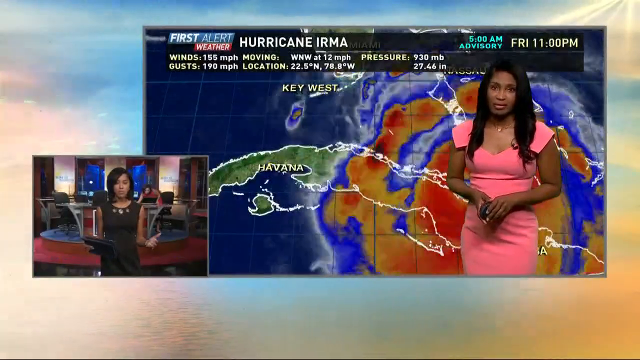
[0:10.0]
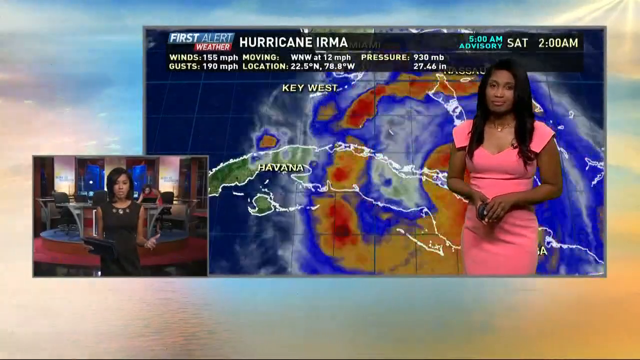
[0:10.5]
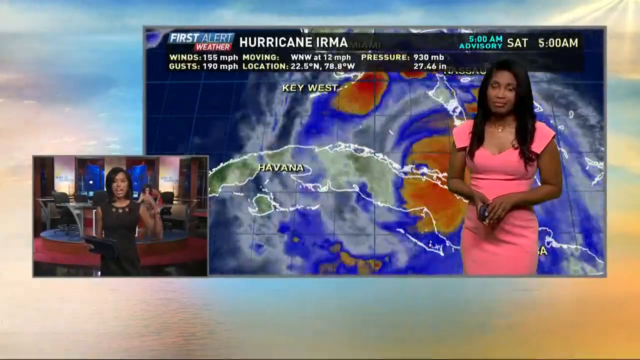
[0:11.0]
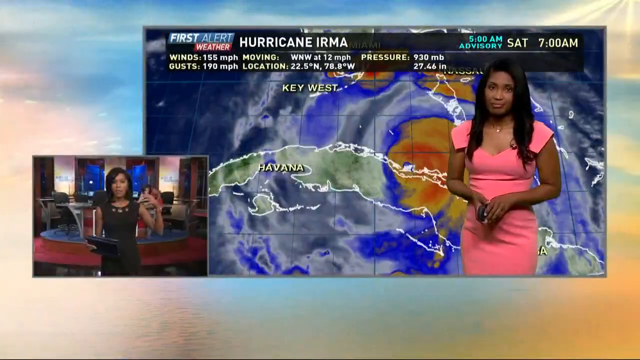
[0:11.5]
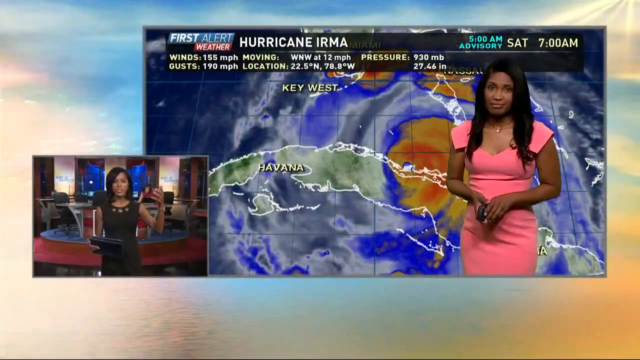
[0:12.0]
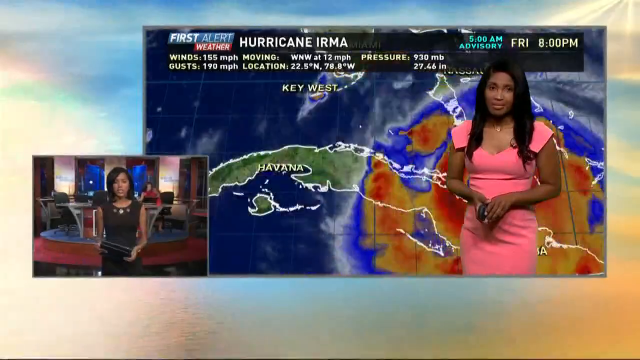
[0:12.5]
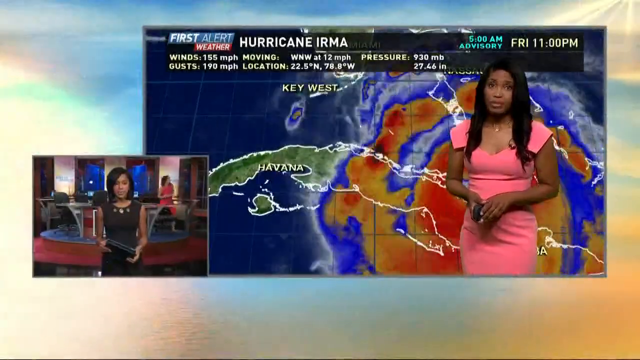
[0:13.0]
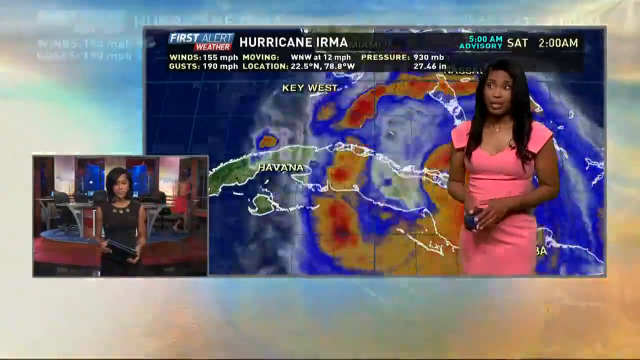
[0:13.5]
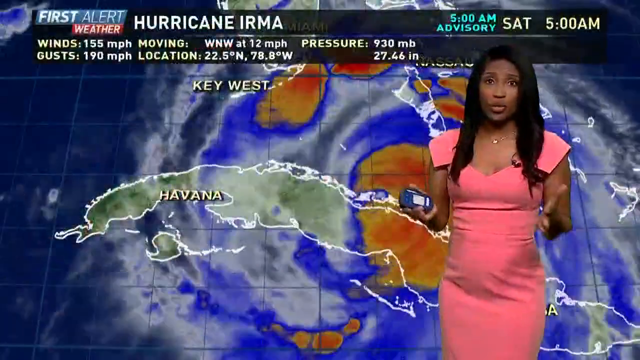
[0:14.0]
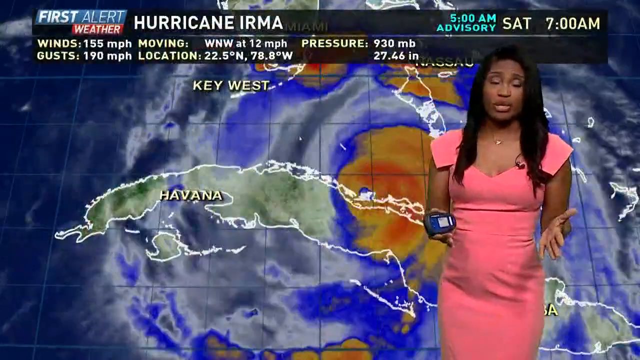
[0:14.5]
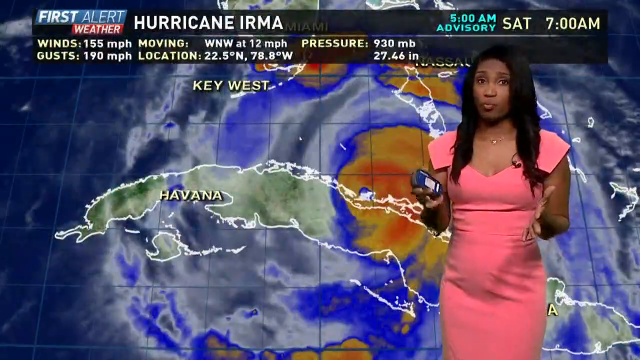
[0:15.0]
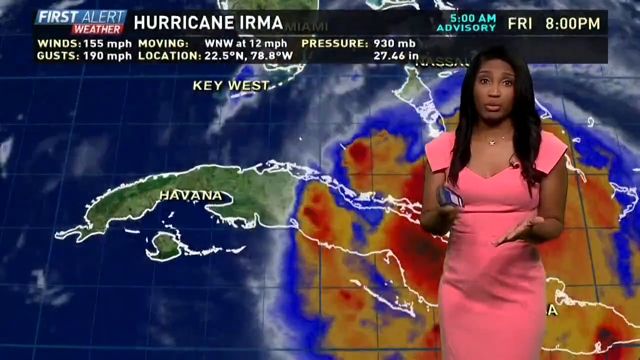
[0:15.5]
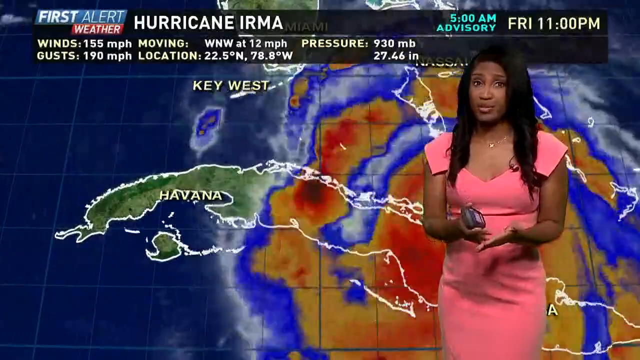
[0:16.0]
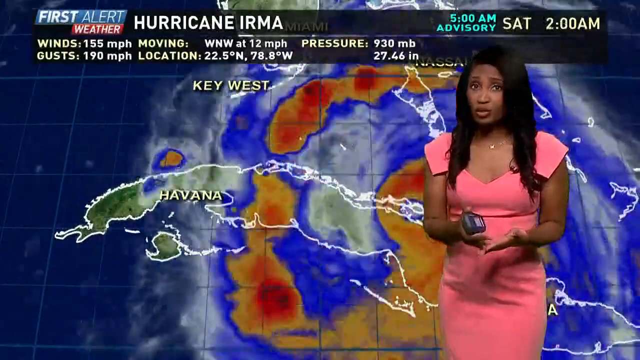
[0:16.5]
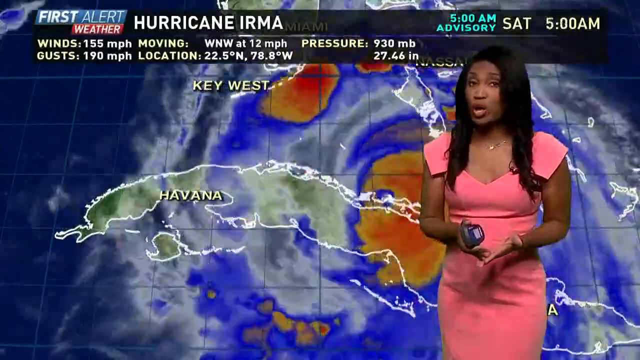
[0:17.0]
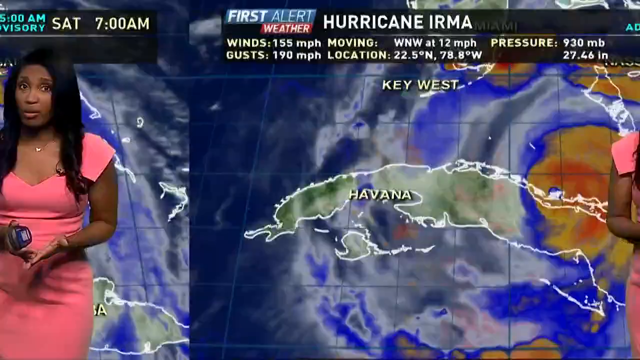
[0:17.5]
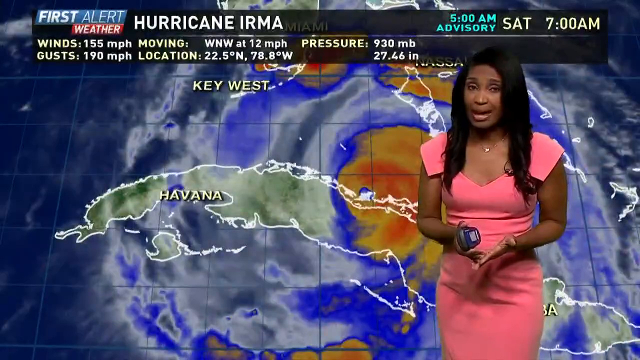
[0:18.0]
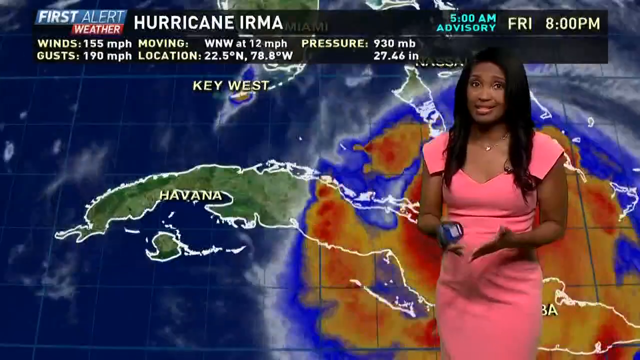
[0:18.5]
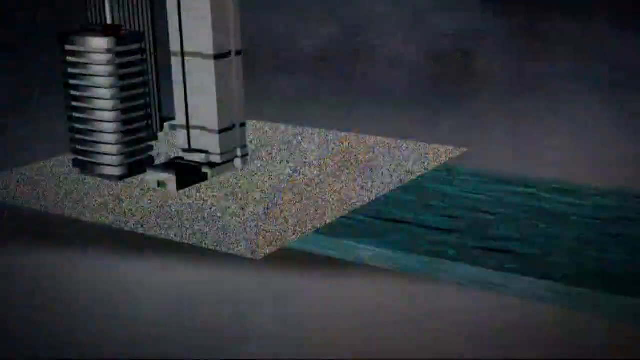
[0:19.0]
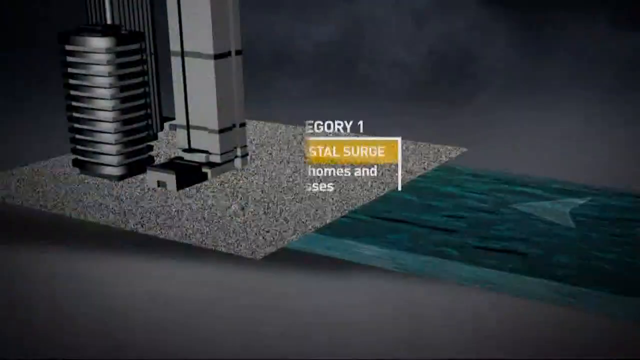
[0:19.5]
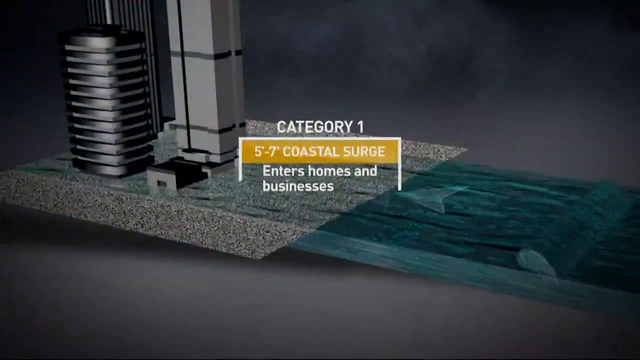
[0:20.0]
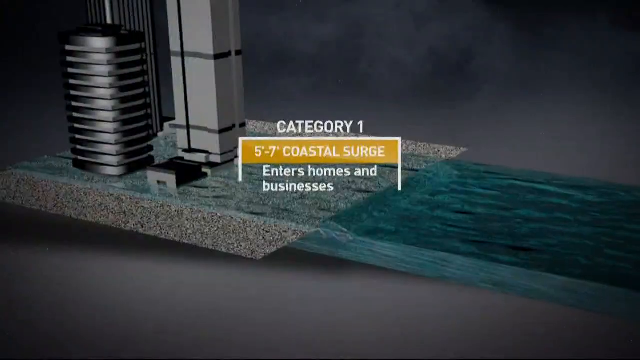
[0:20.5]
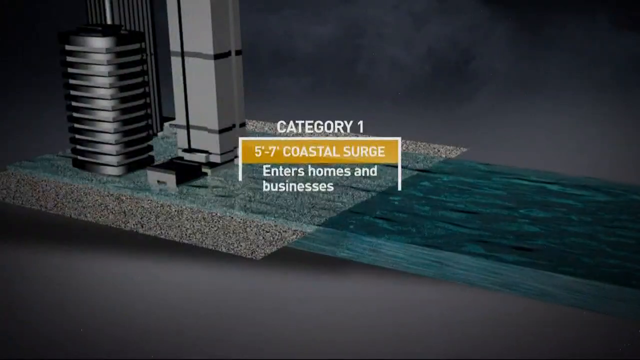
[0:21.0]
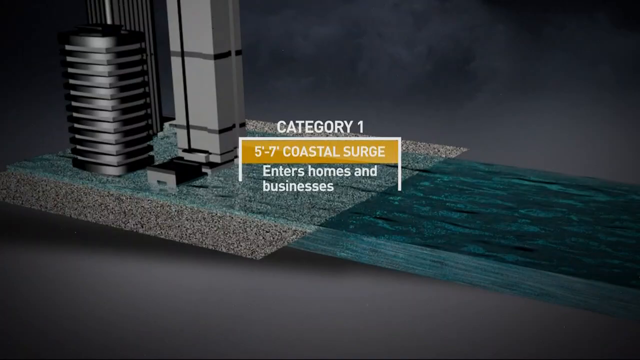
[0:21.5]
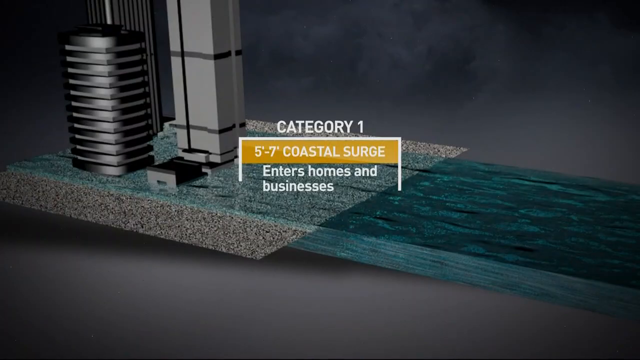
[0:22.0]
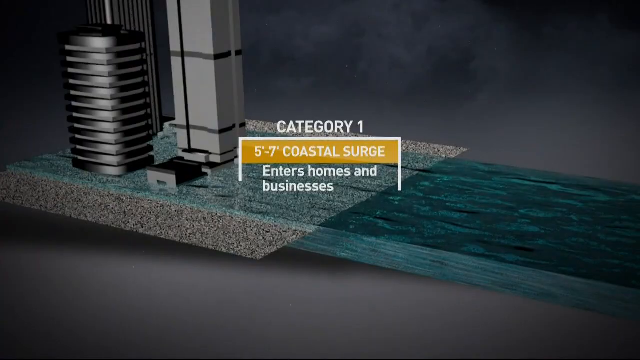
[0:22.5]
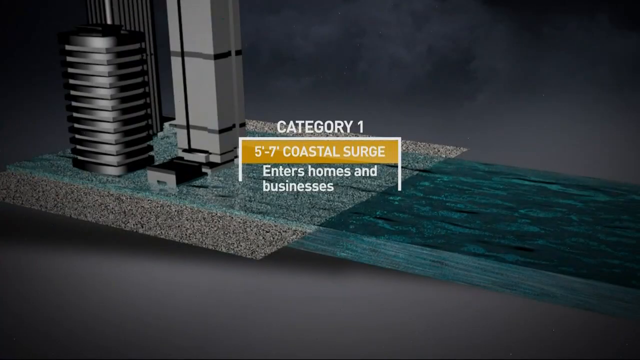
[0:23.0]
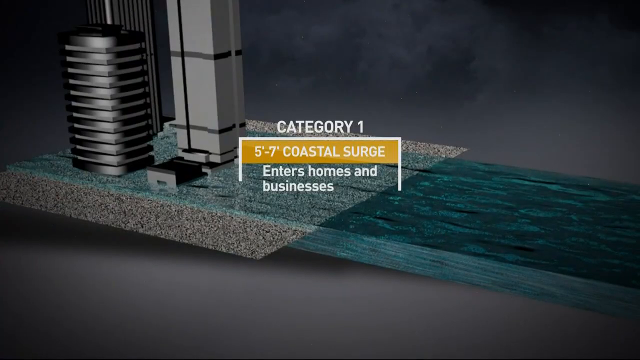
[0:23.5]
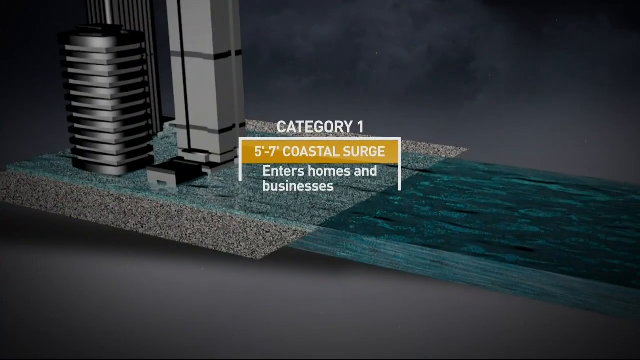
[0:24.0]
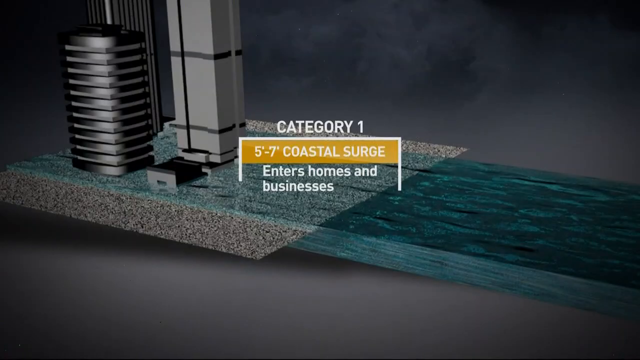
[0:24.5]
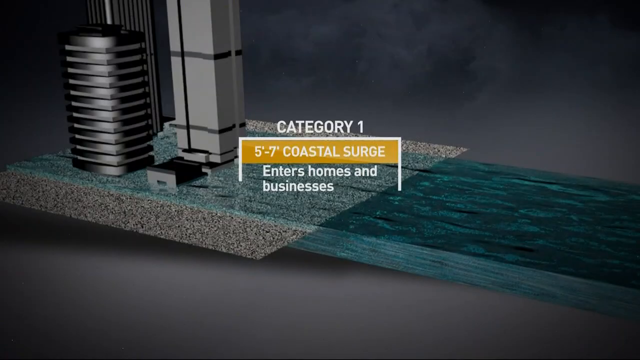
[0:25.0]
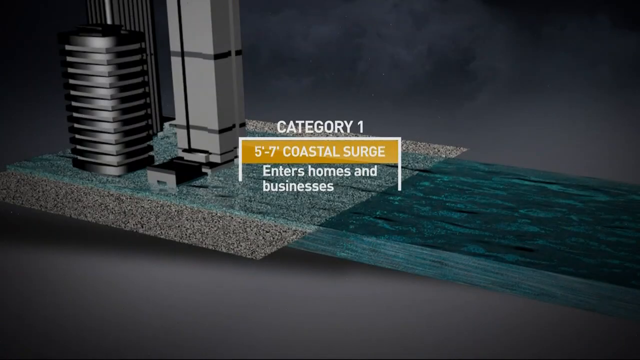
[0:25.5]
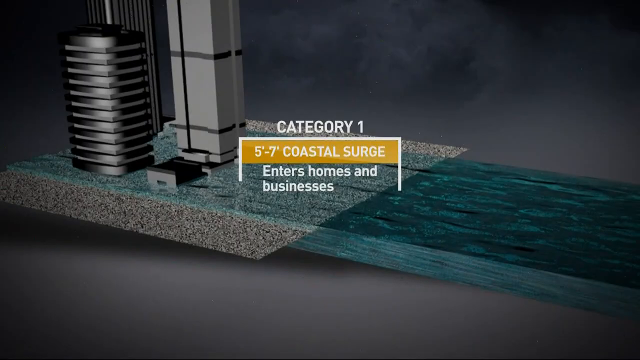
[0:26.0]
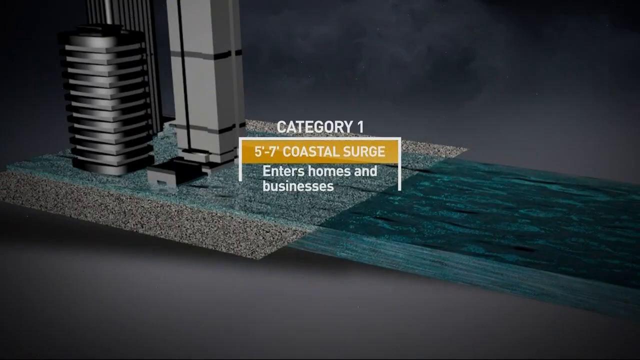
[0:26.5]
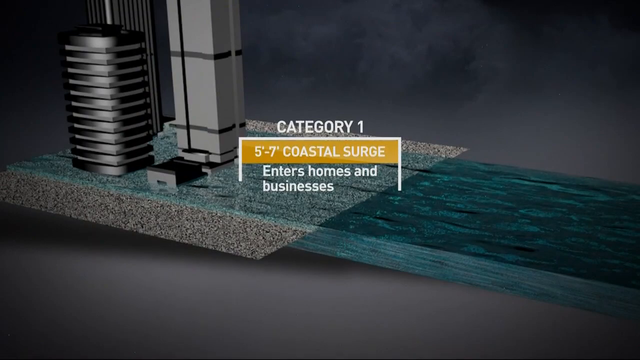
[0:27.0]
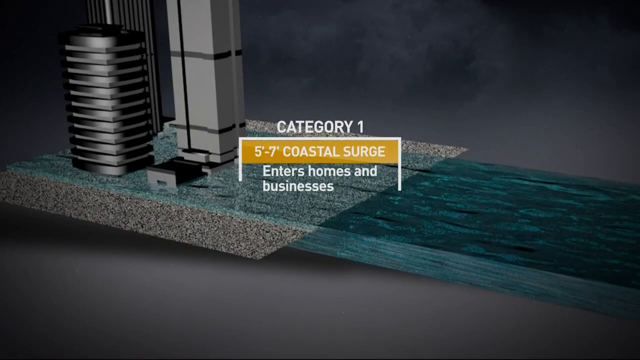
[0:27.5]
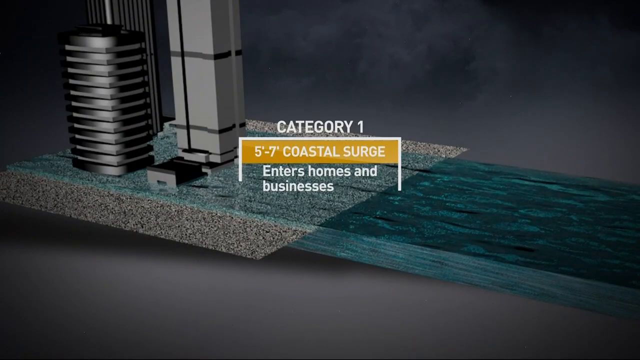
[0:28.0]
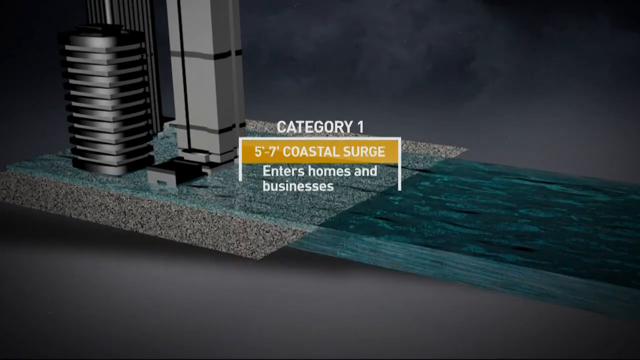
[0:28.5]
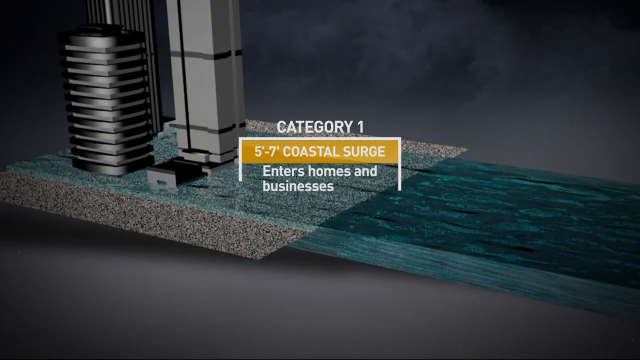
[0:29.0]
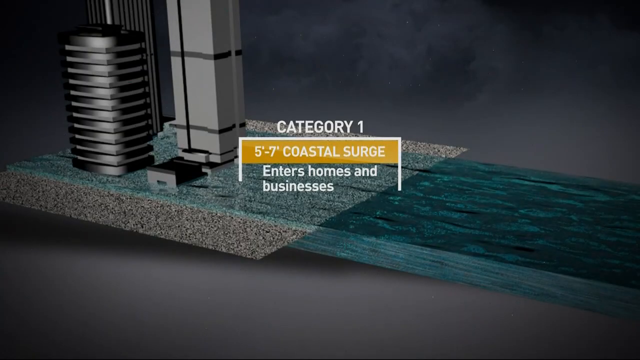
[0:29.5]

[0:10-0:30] The weather report shows two people in captions, one in a bigger caption and the other in a smaller caption. In the background there is a bit of yellow on the right side and blue at the top. In the smaller caption on the right, a woman holds a black thing and speaks, raising one of her hands; she looks directly at the camera, and a person can be seen behind her. The person in the pink dress and necklace is shown holding something in her right hand that looks like a remote controller. The weather shown is for Saturday and Friday. Text then reads "Category 1, 5 to 7 coastal surge enters home and businesses", presented on a grey background. Two things can be seen: one that looks like a pillar, and another black one standing right next to that pillar. The picture keeps moving, and there is a bit of green on the screen. "Coastal surge" appears on a yellow background with the words written in white.